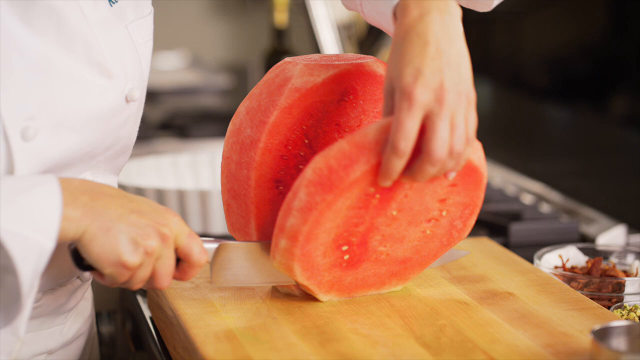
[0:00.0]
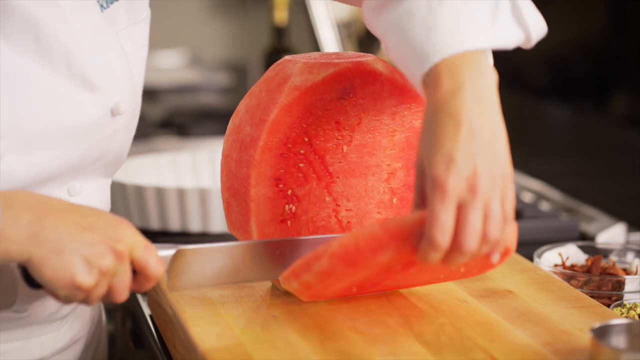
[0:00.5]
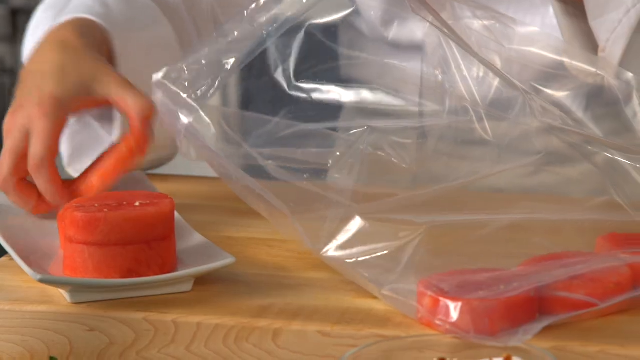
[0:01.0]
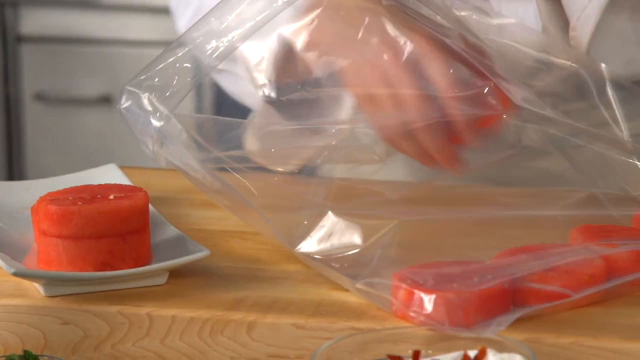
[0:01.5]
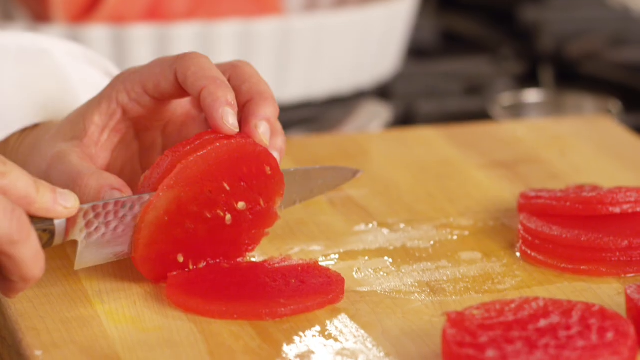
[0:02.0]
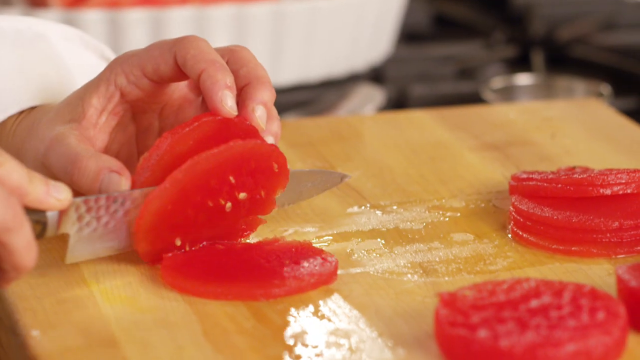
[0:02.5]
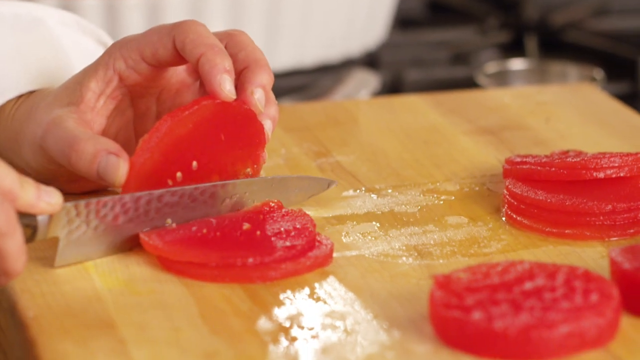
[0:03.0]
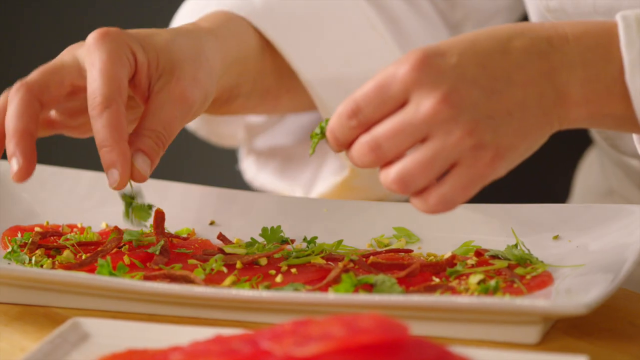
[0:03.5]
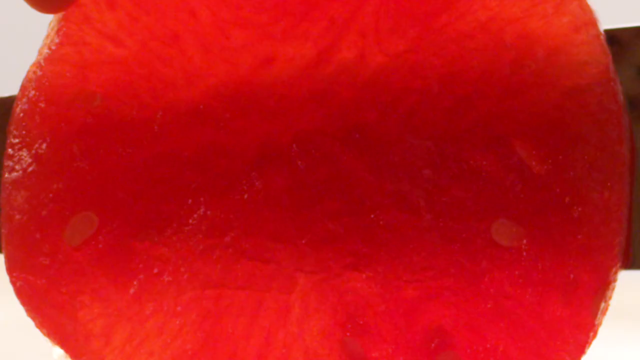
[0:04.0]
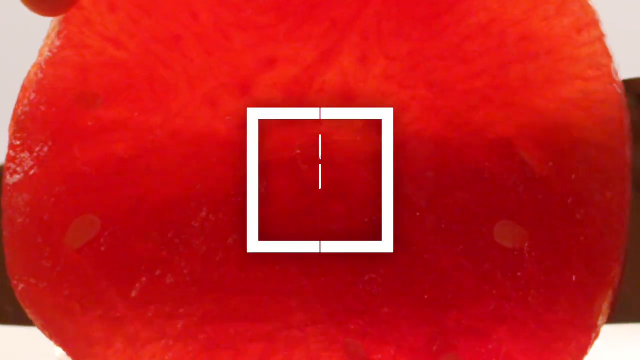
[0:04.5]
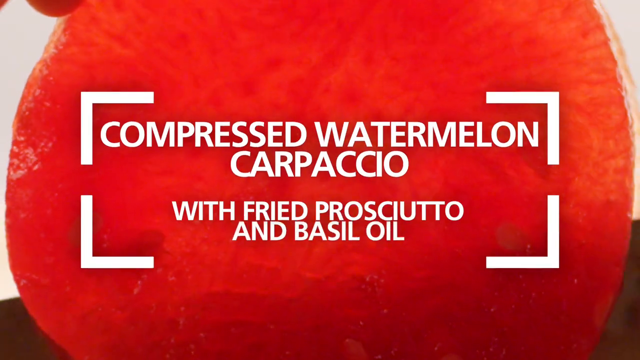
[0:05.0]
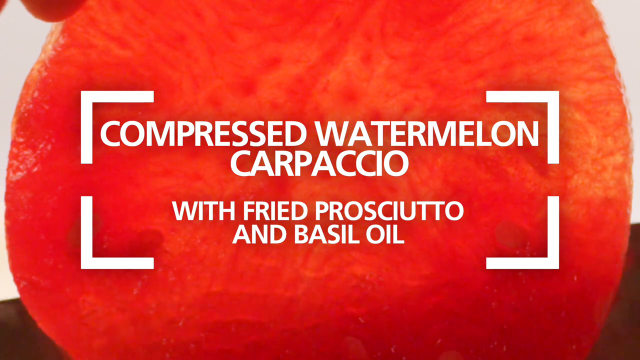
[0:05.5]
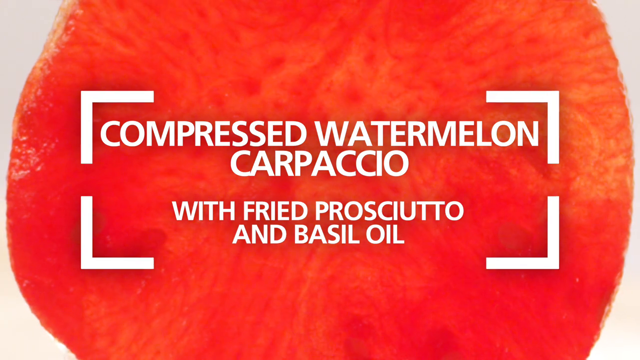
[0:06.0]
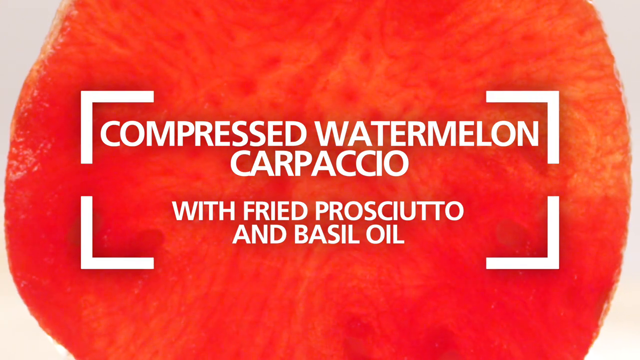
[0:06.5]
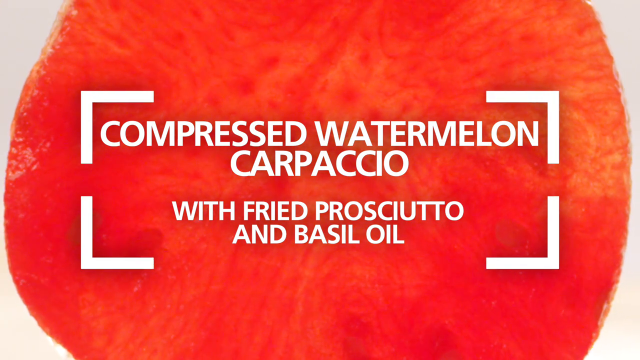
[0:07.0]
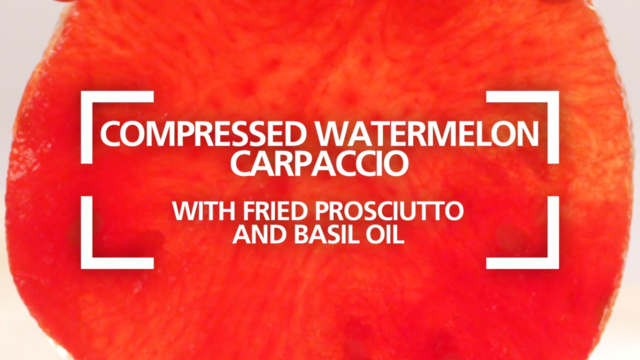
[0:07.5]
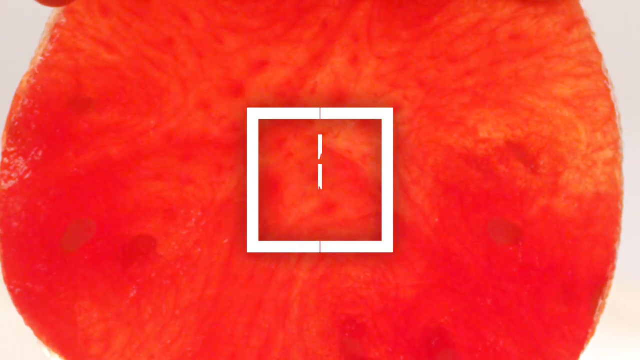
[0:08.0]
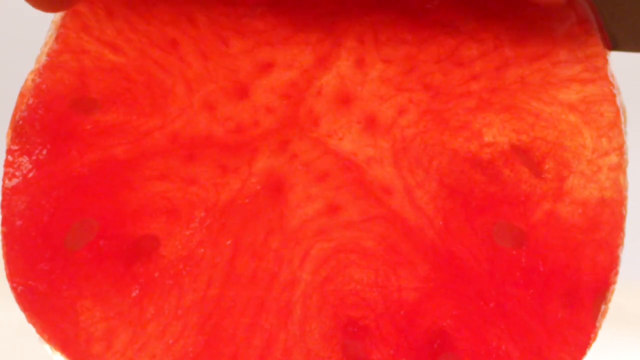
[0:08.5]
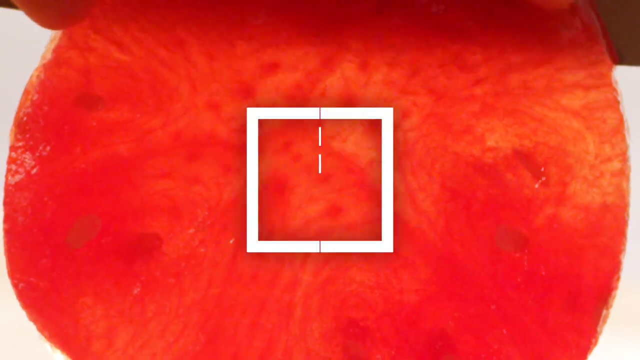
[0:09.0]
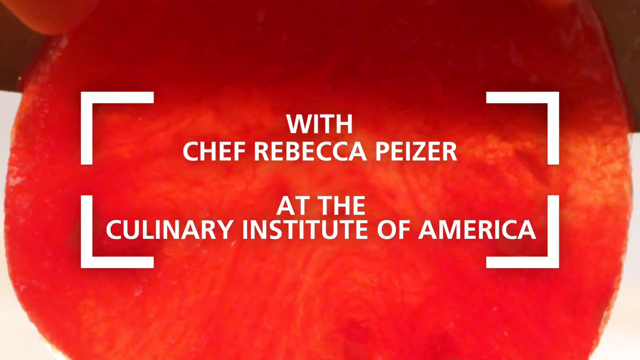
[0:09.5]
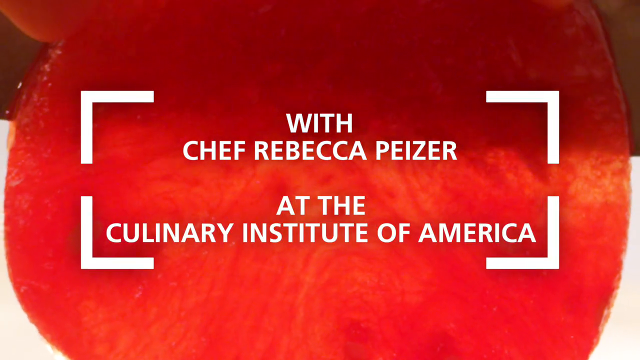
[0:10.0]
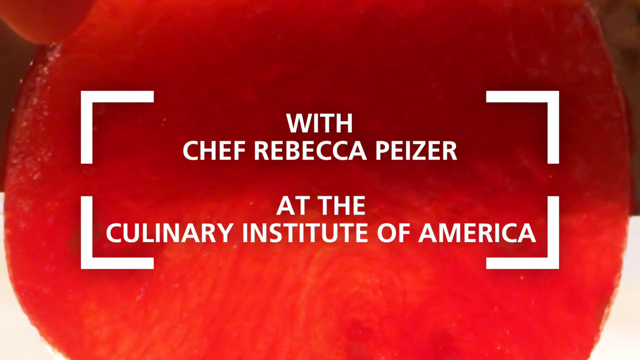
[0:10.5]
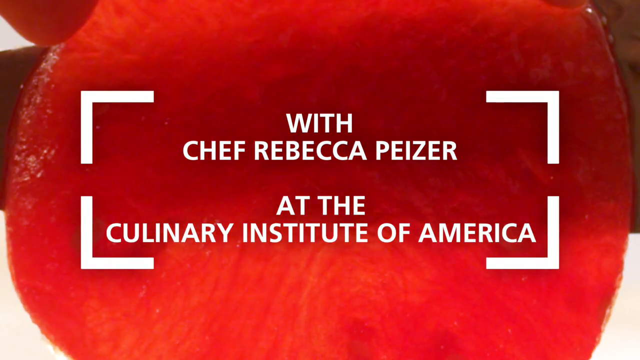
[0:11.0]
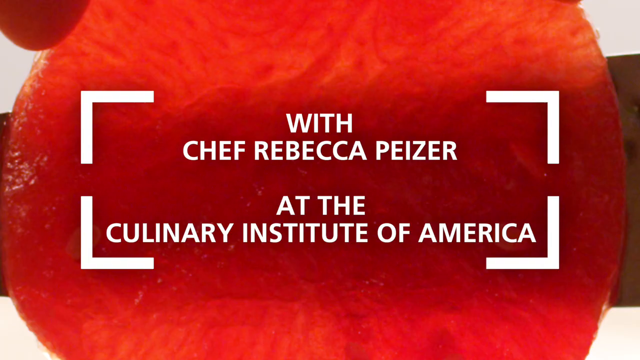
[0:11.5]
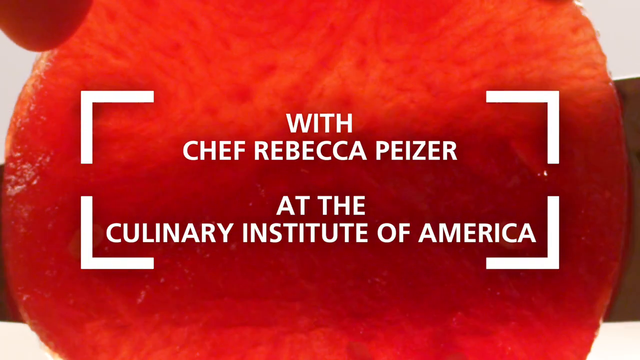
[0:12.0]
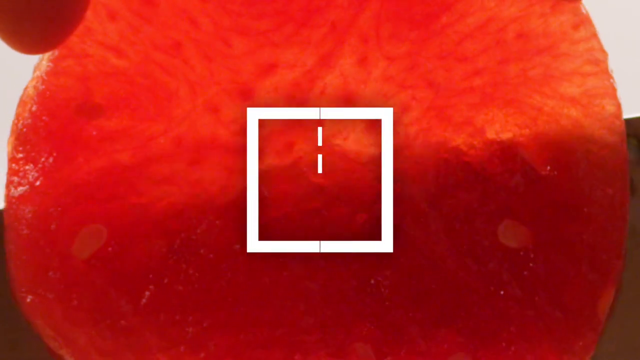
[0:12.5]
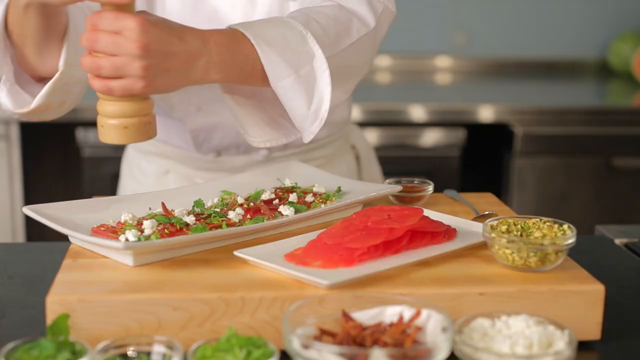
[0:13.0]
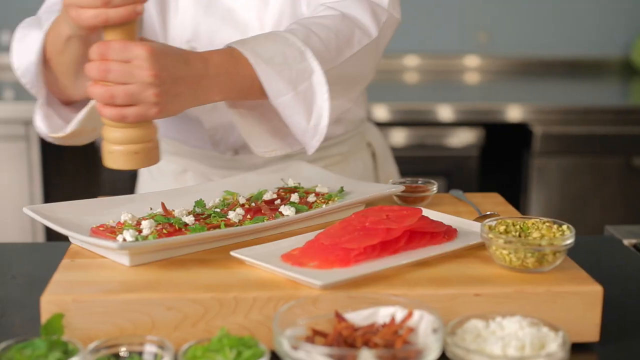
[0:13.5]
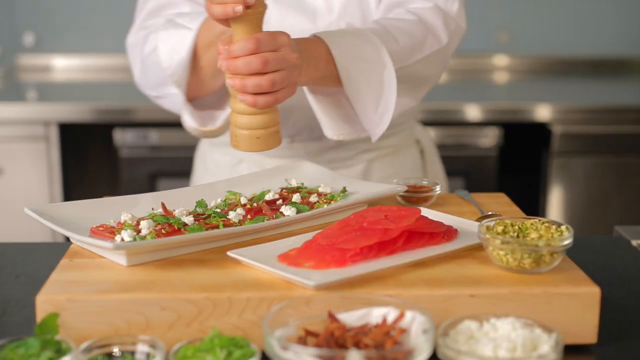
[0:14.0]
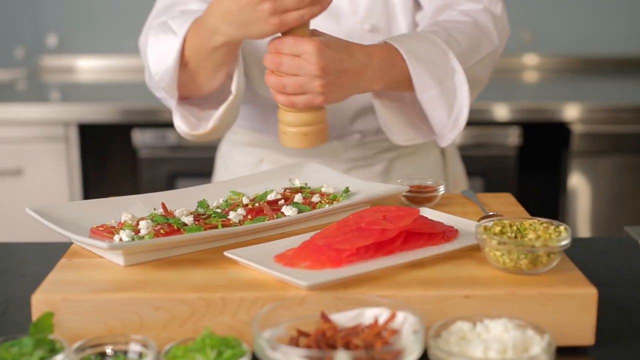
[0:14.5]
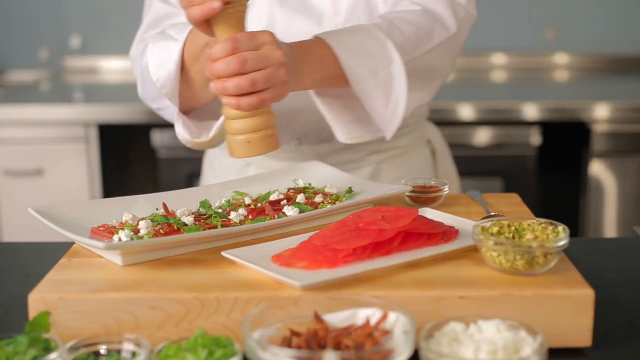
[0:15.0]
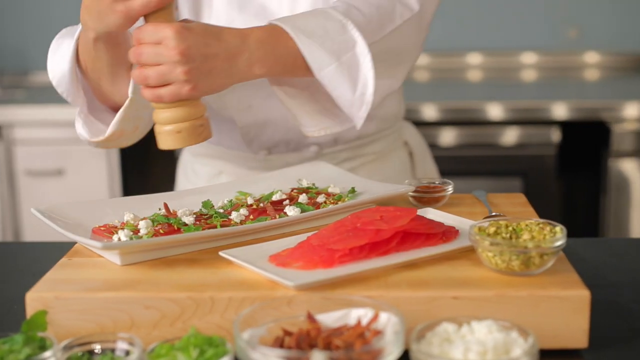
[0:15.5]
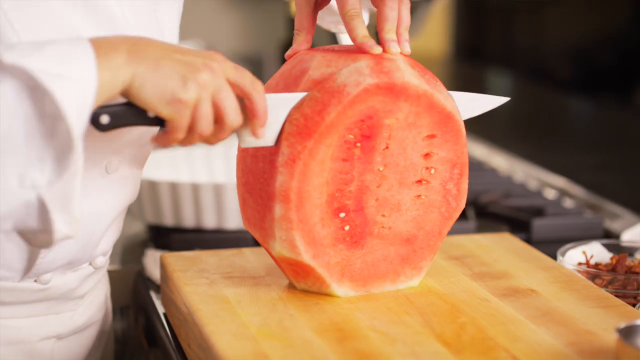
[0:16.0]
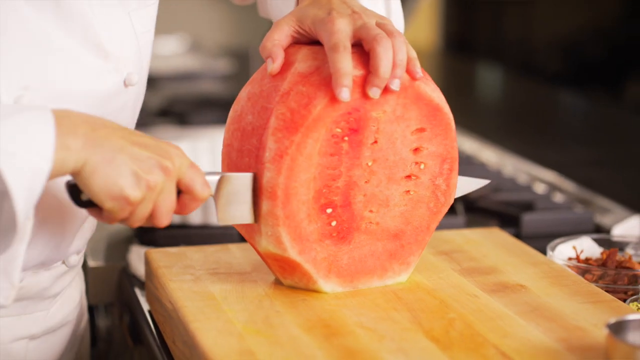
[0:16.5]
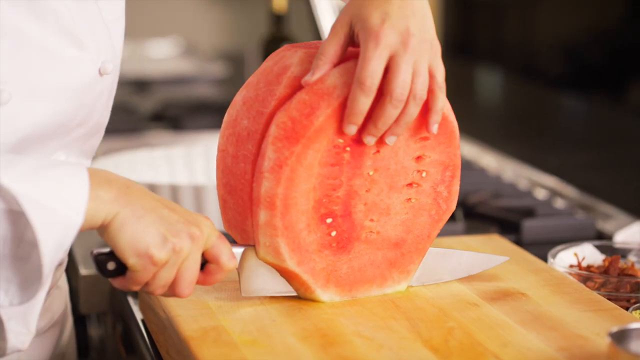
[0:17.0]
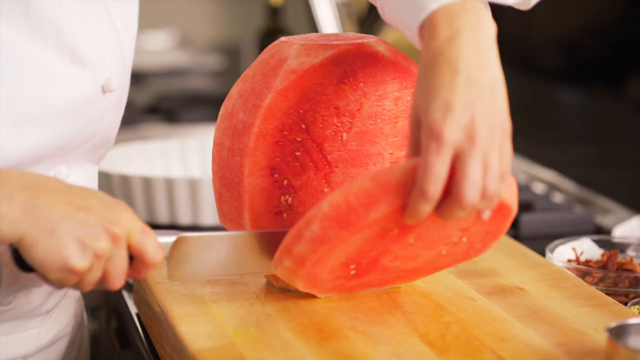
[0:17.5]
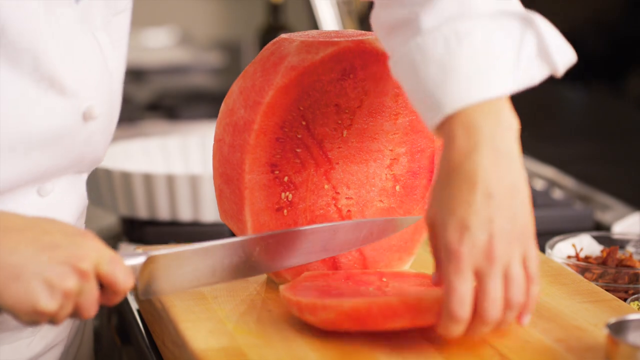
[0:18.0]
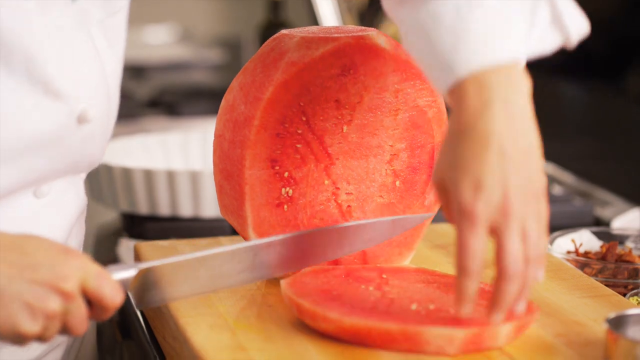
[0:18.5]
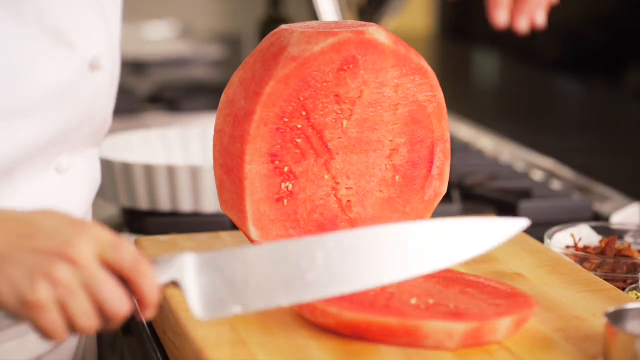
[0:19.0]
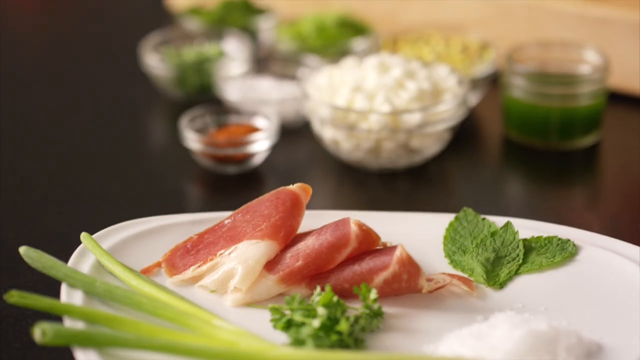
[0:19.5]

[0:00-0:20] Someone who appears to be a chef cuts what looks like watermelon, or some type of melon, on a cutting board in a white room. The fruit is put into a plastic bag and then onto a plate. On-screen text reads "compressed watermelon carpaccio" and "with fried prosciutto and basil oil," followed by "with chef Rebecca at the Culinary Institute of America." Chef Rebecca puts some seasoning over the watermelon dish, which has a nice little lighting. She slices the watermelon into big slices. Then something like bacon and a small green leaf are shown.